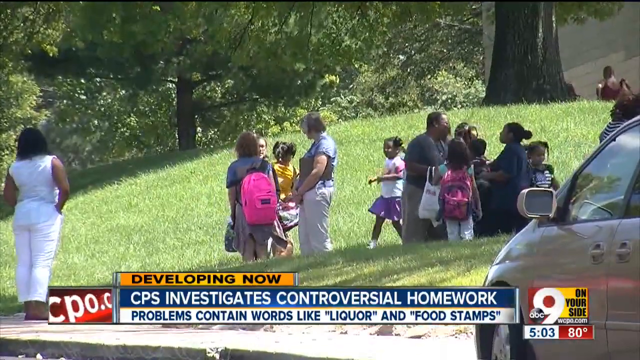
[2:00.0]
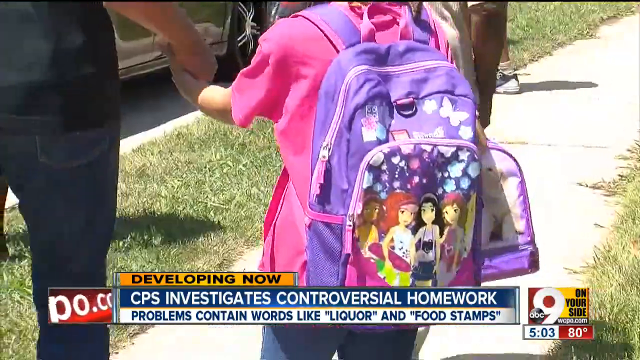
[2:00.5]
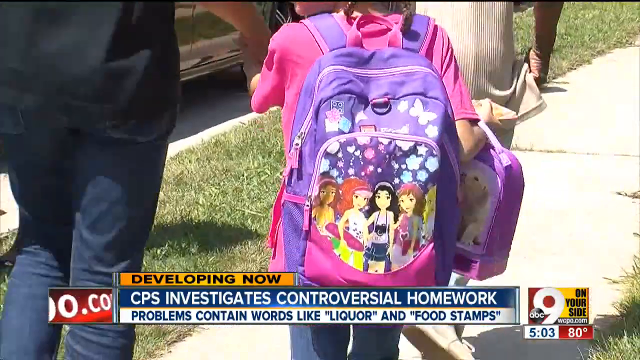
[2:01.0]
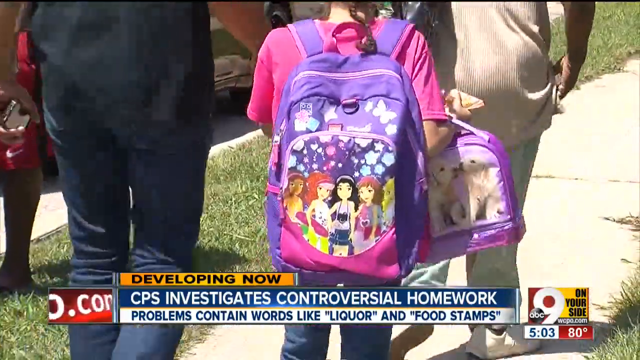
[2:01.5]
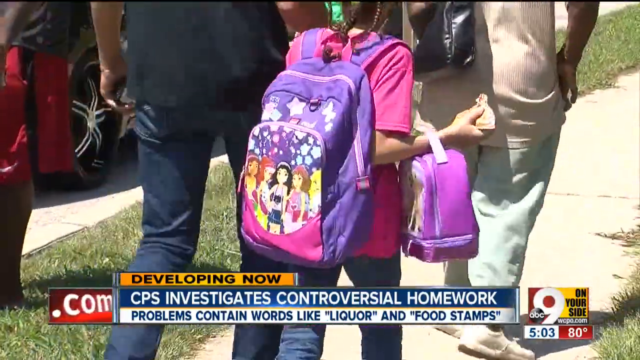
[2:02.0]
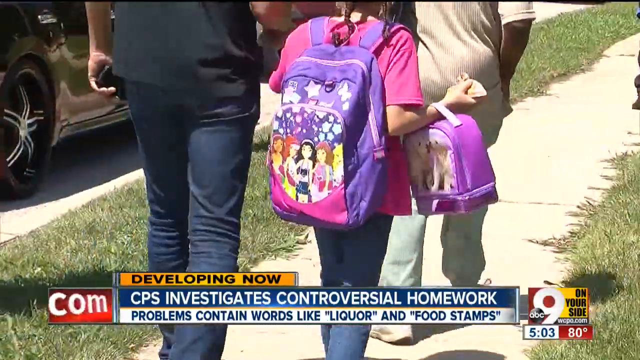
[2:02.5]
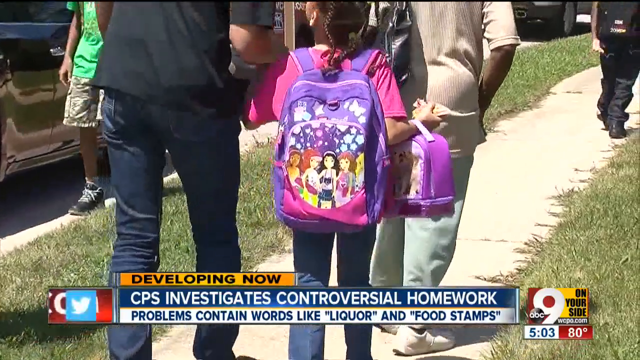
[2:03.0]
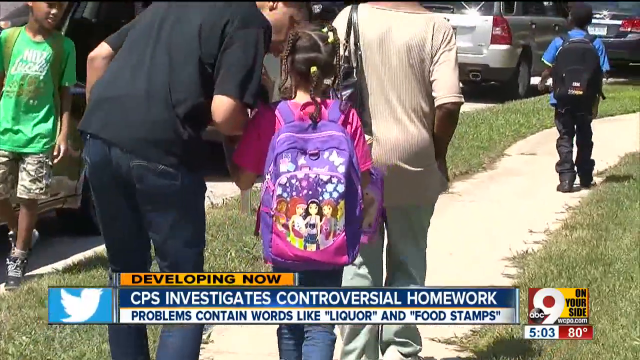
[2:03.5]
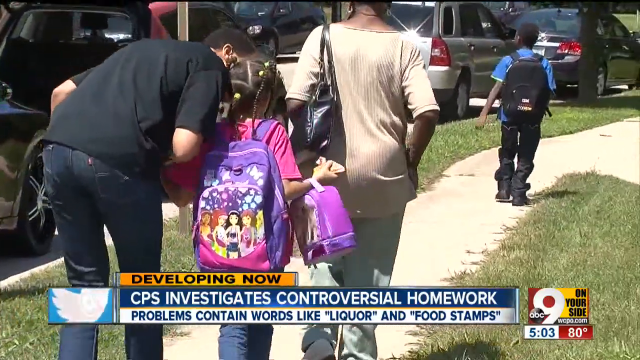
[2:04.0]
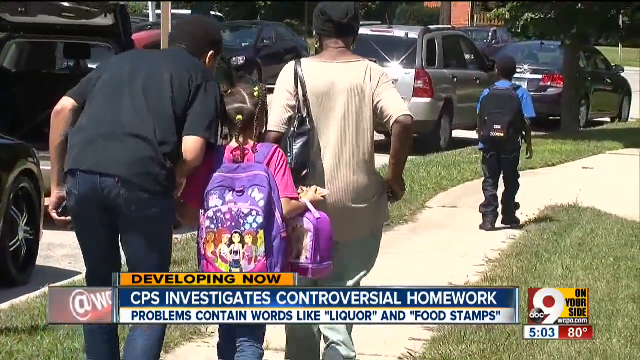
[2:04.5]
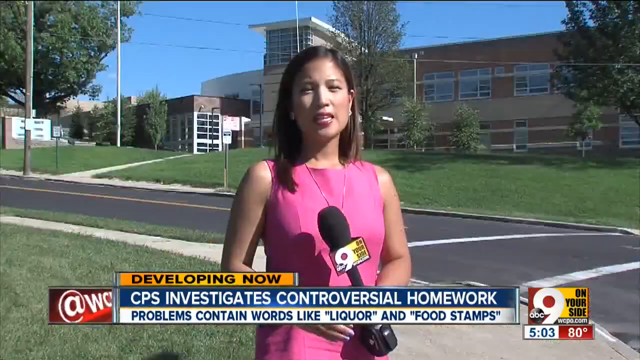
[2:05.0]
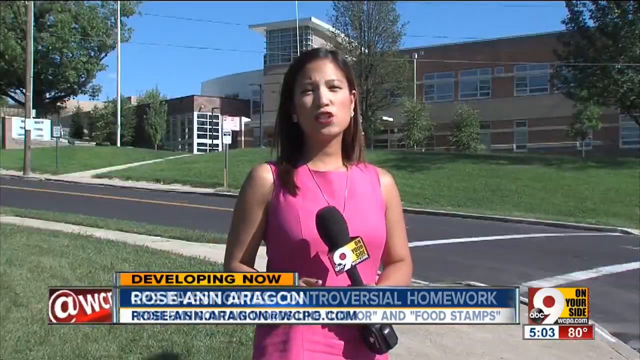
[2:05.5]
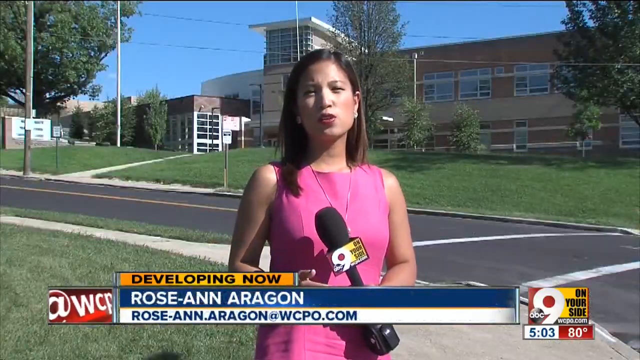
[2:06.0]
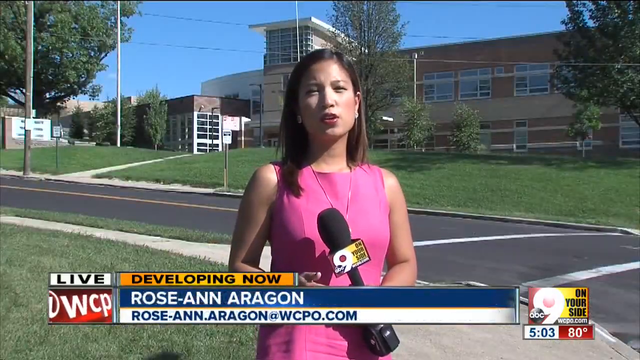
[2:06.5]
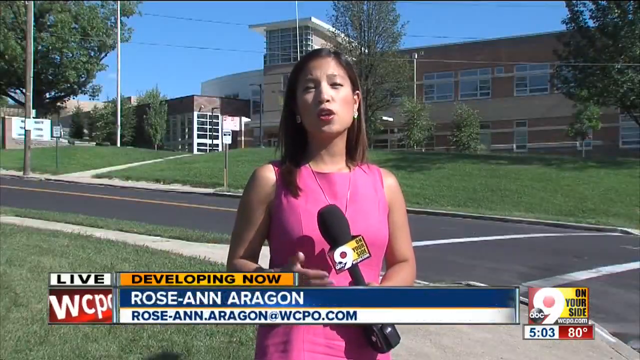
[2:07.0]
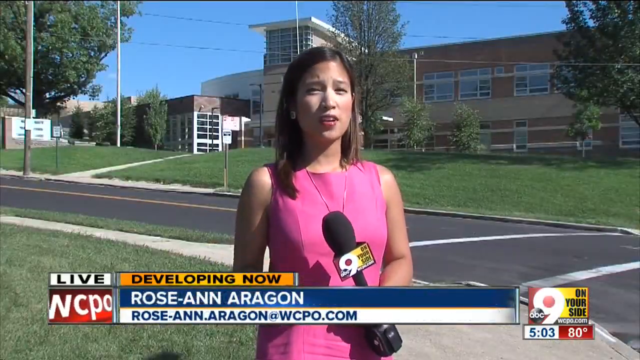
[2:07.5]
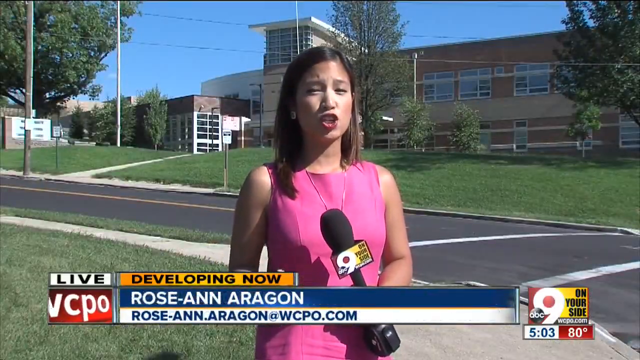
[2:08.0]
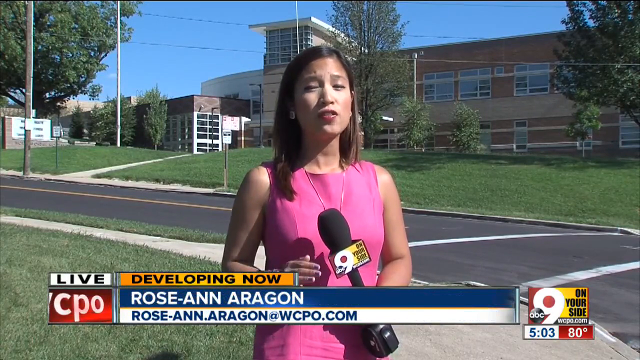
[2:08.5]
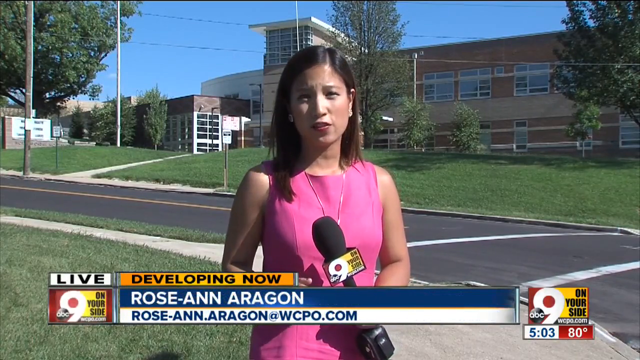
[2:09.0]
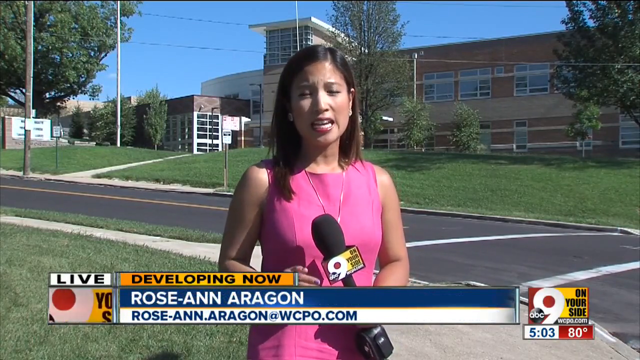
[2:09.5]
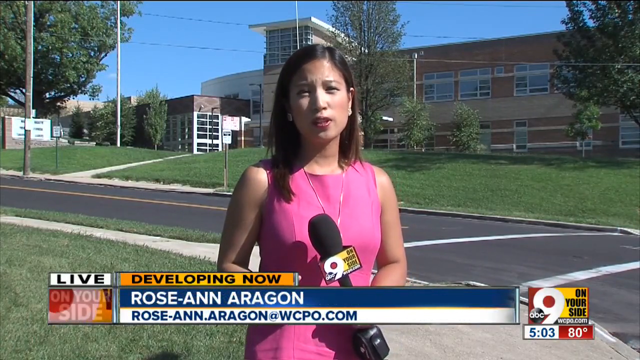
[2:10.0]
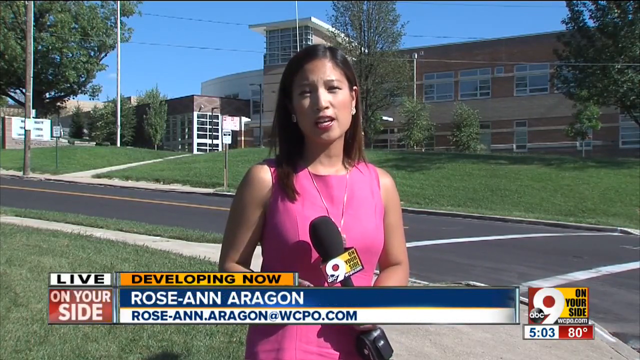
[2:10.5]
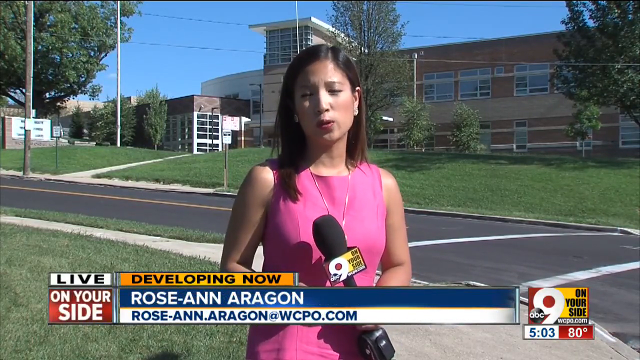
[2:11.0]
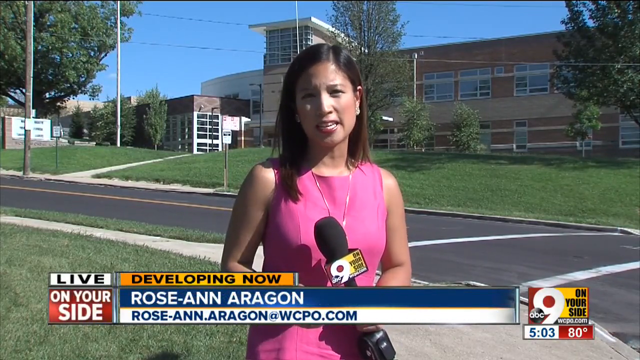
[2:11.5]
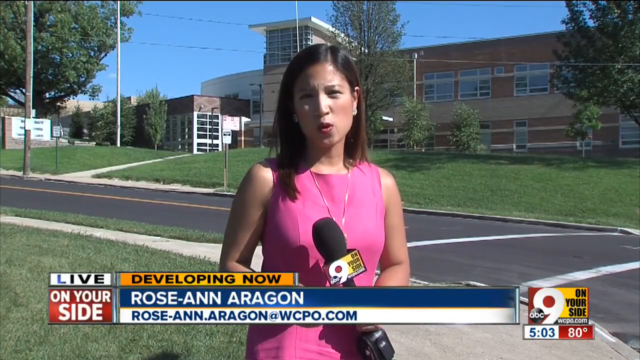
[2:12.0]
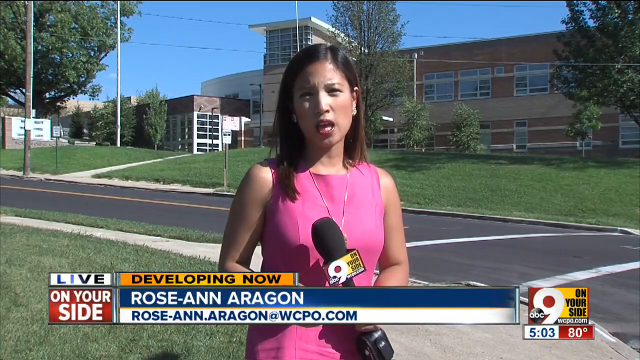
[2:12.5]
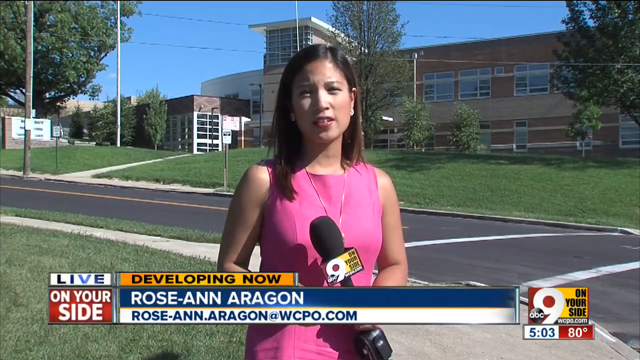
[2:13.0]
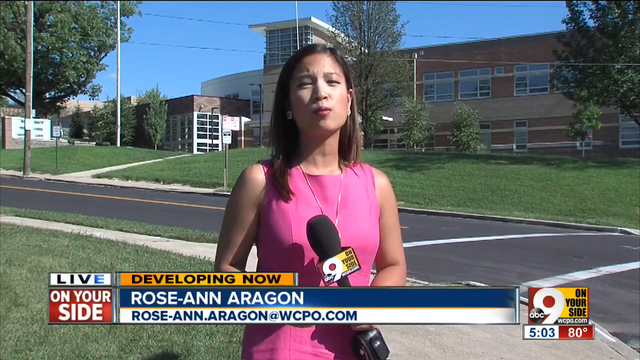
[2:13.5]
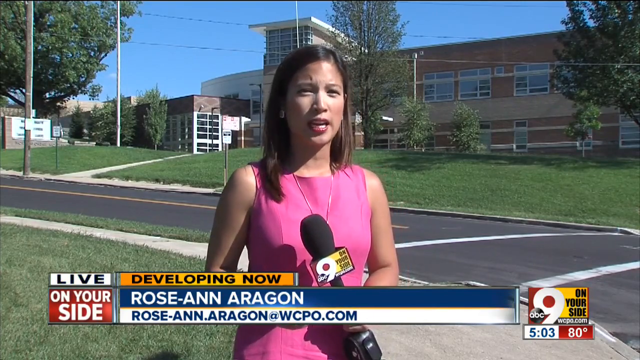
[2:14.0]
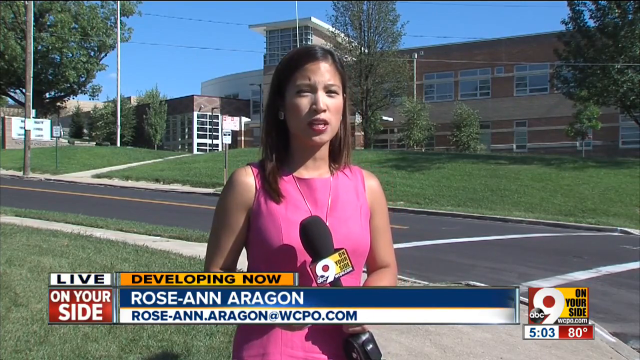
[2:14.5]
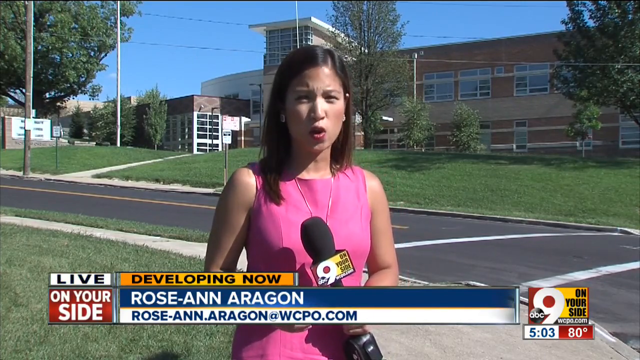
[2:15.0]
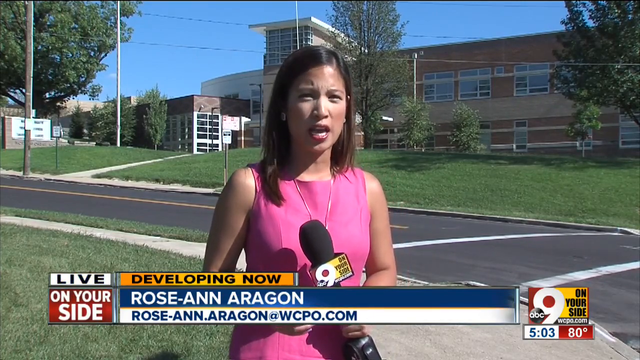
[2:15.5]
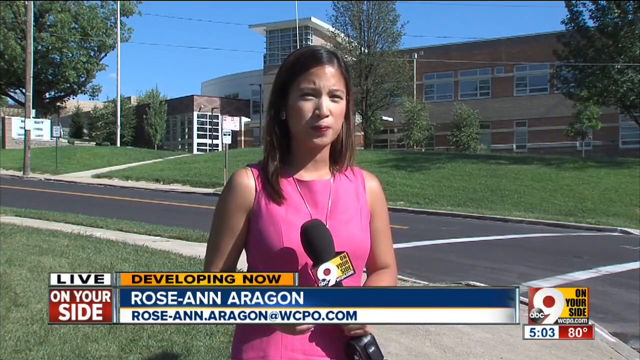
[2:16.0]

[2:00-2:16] The news program shows "Developing Now" as a child wearing a purple backpack walks, holding someone's hand with their left hand, and continues walking down the sidewalk. The video cuts to a reporter holding up a microphone in their left hand. They have shoulder-length hair and a pink top, and they gesture with their right hand, kind of raising and lowering it as they continue speaking. Behind them is a school with no cars; it appears to be fairly empty, and it is daytime. Trees are in the background, a road runs right behind, followed by a sidewalk that leads up to the building. The building has a somewhat modern style, with multiple rows of windows stacked on top of each other, and it is at least a couple of stories tall.